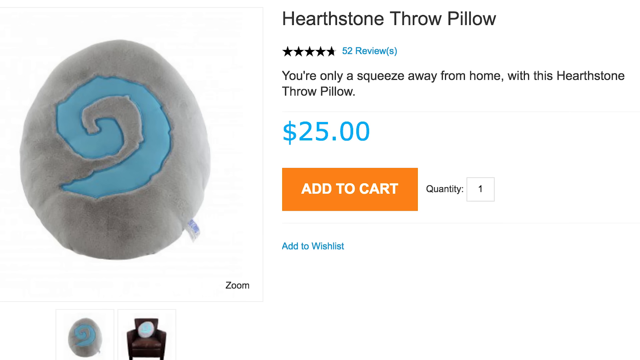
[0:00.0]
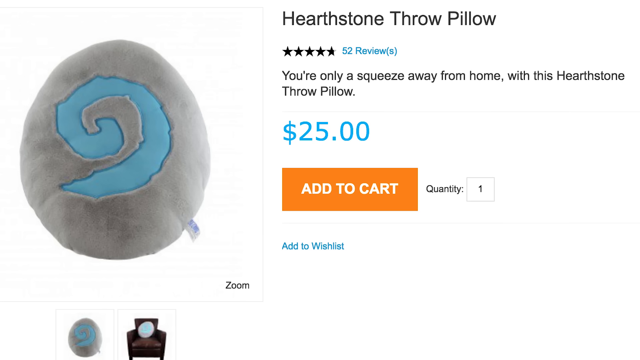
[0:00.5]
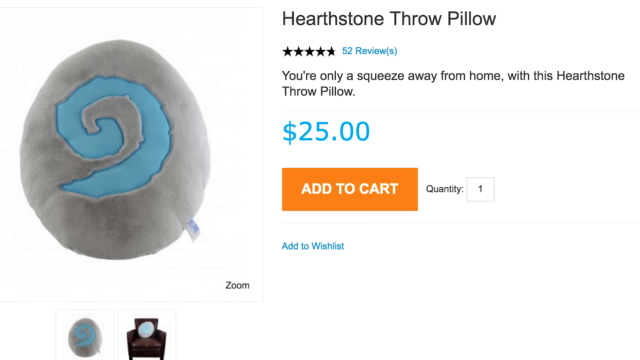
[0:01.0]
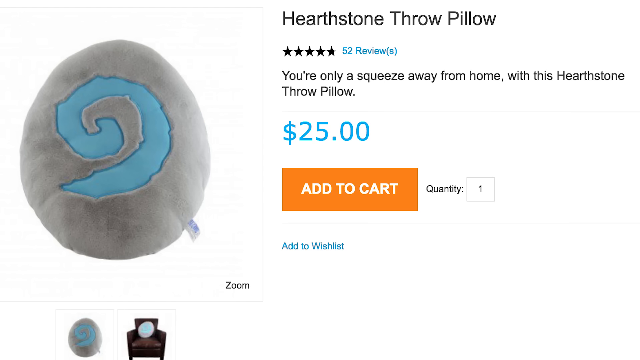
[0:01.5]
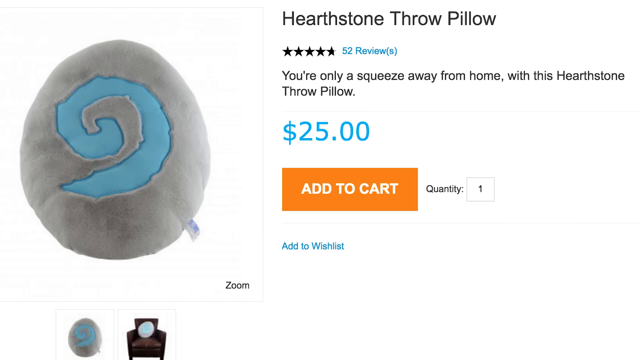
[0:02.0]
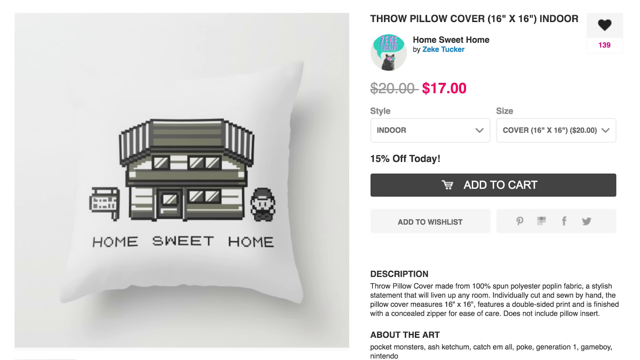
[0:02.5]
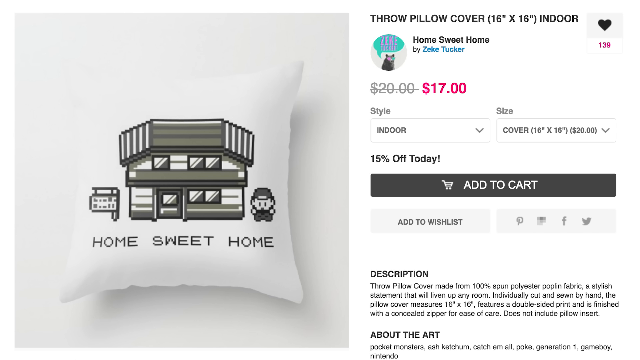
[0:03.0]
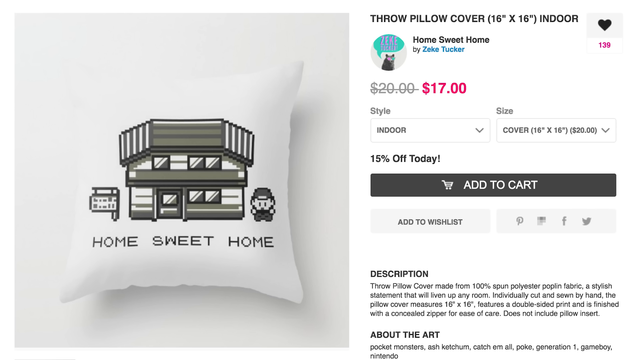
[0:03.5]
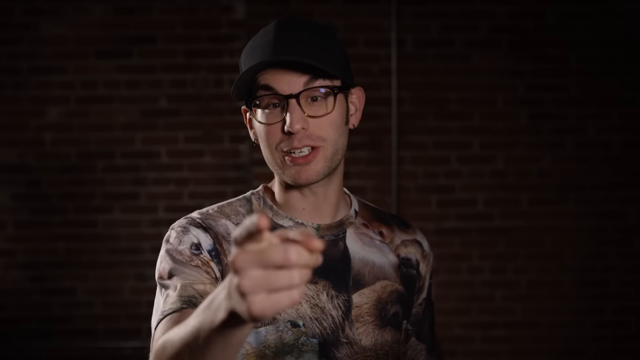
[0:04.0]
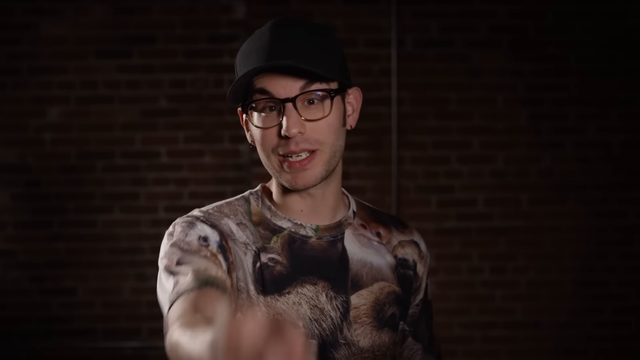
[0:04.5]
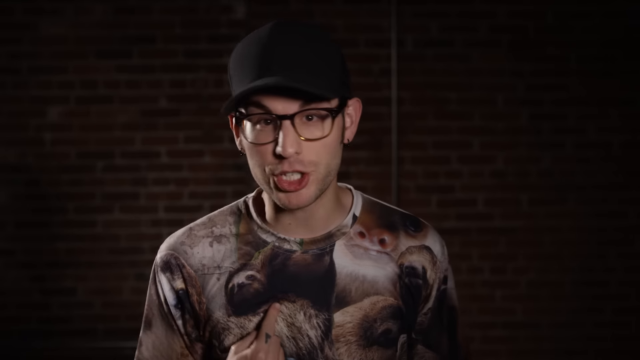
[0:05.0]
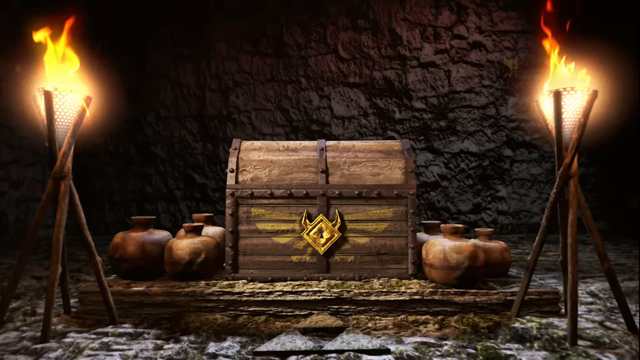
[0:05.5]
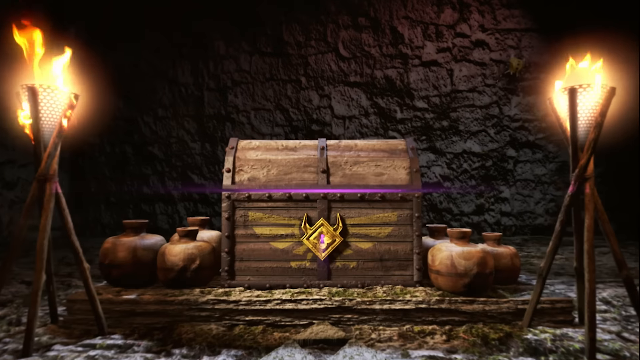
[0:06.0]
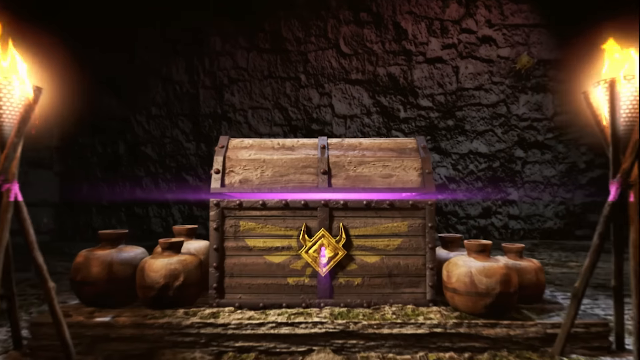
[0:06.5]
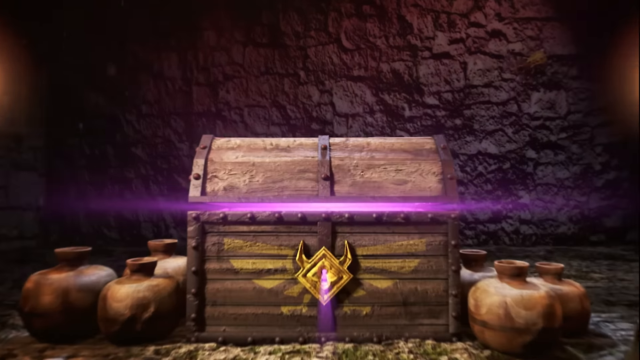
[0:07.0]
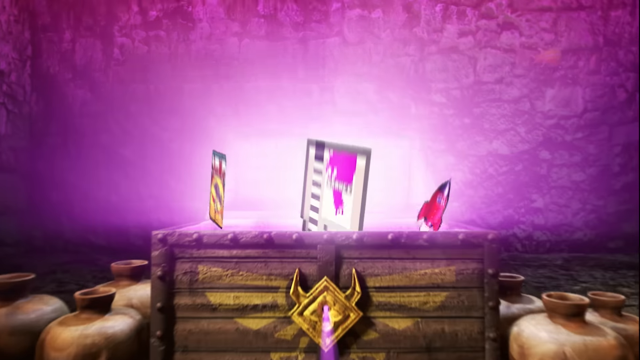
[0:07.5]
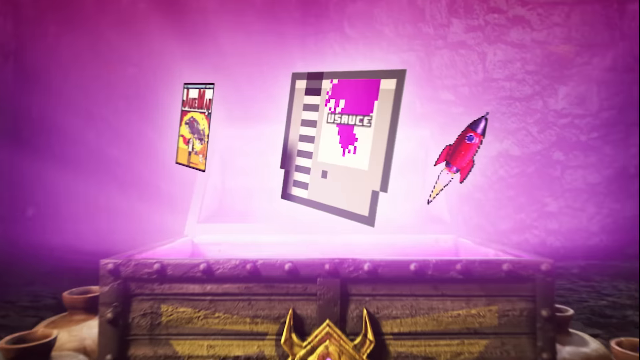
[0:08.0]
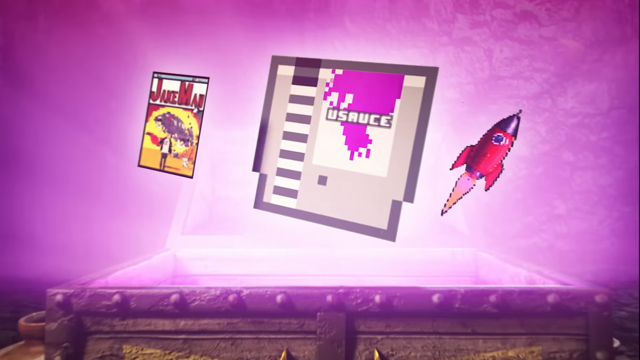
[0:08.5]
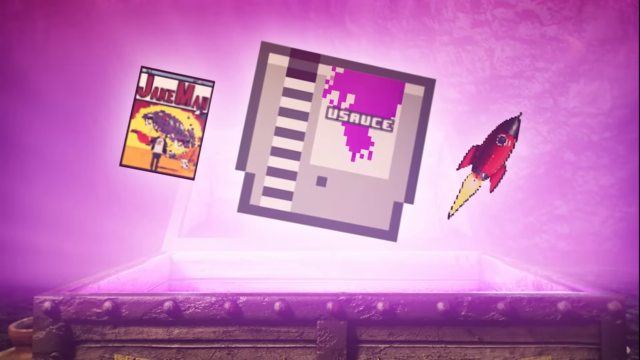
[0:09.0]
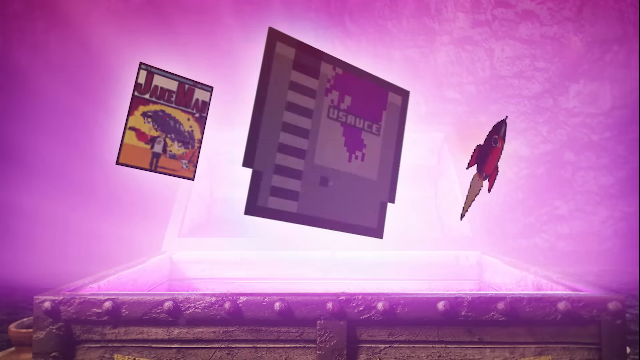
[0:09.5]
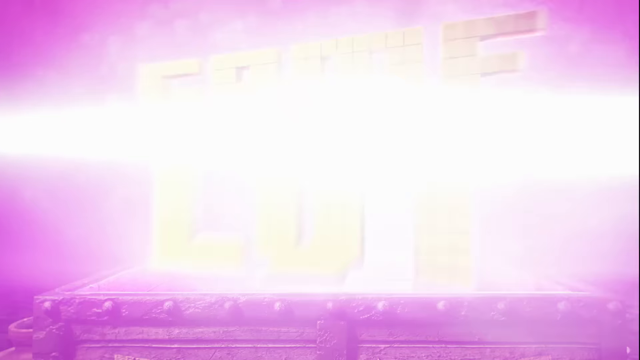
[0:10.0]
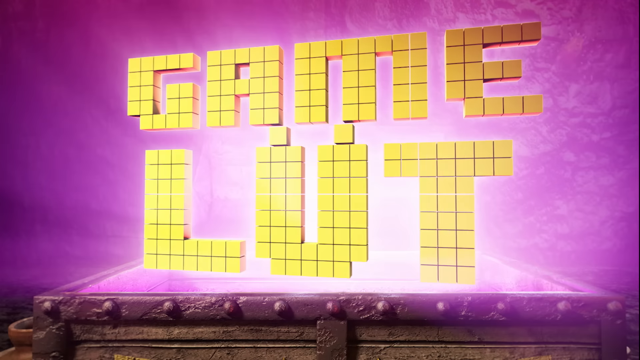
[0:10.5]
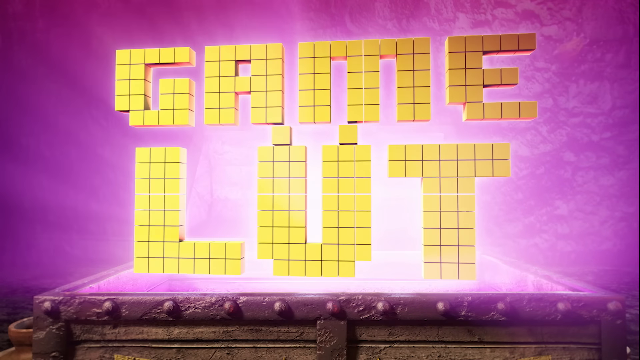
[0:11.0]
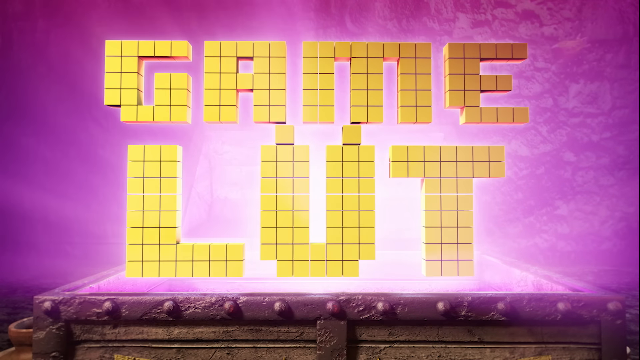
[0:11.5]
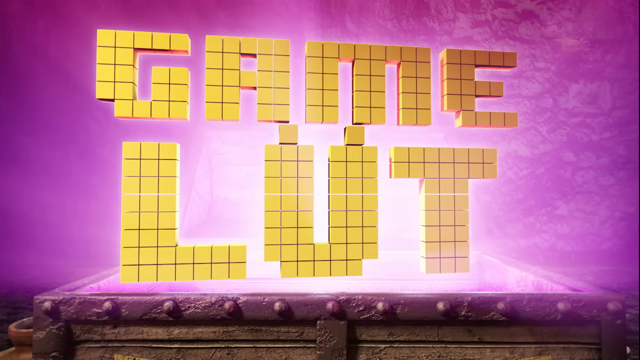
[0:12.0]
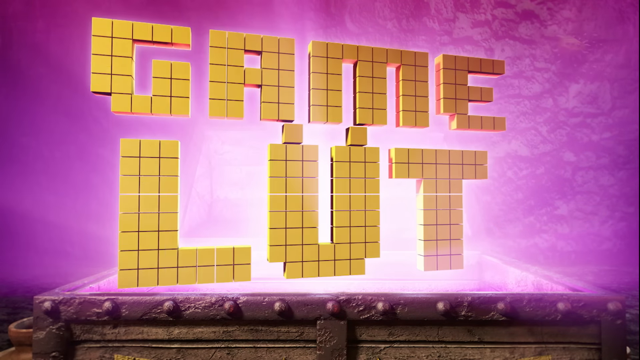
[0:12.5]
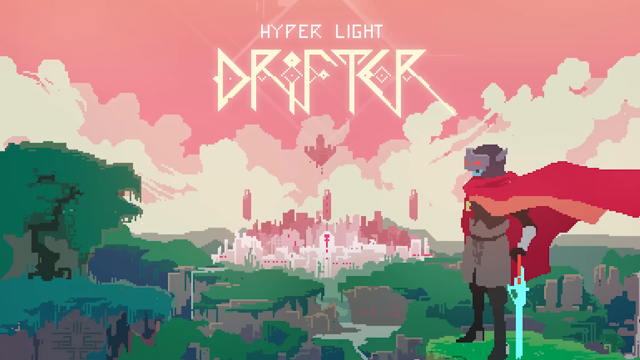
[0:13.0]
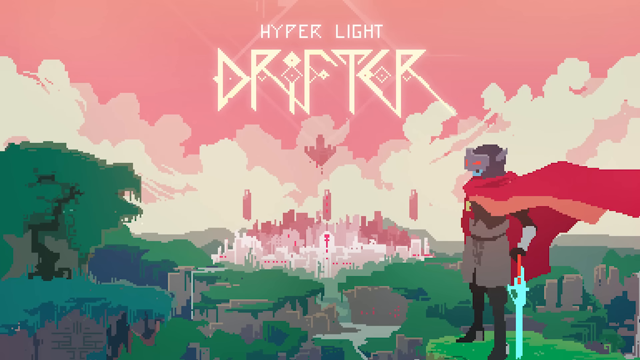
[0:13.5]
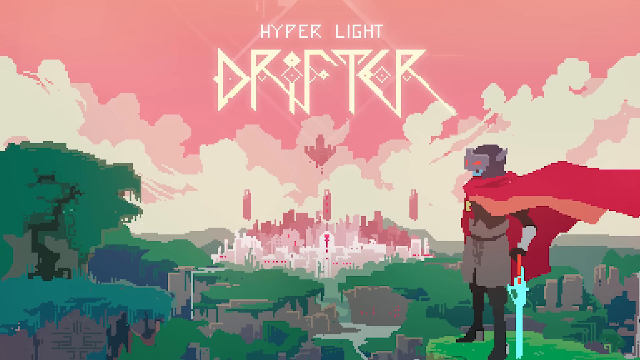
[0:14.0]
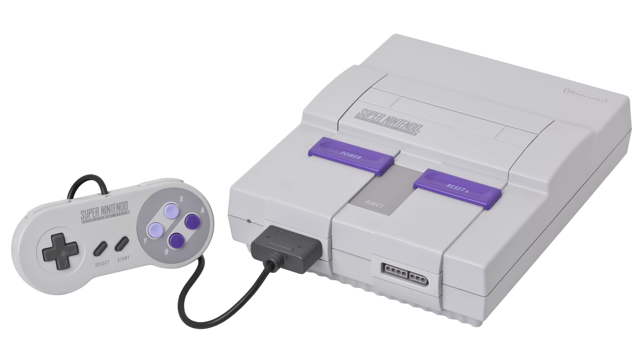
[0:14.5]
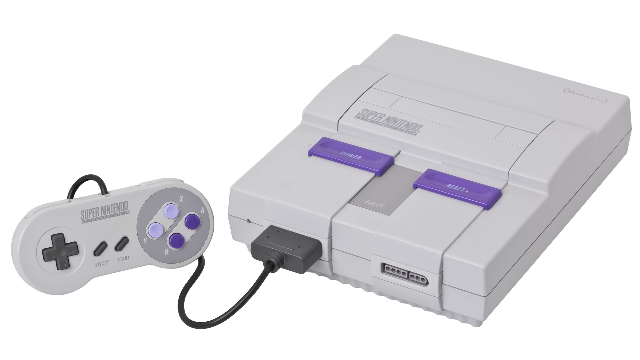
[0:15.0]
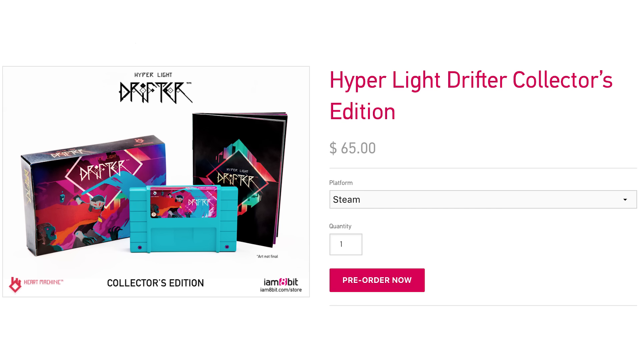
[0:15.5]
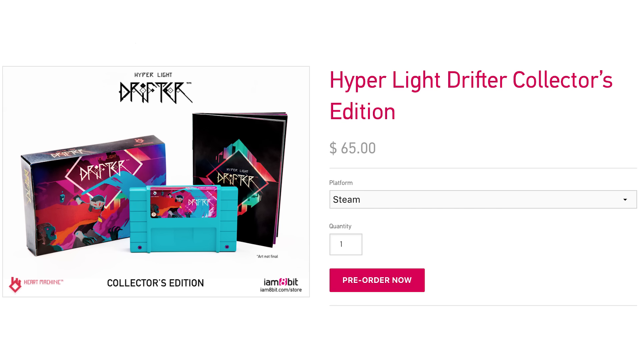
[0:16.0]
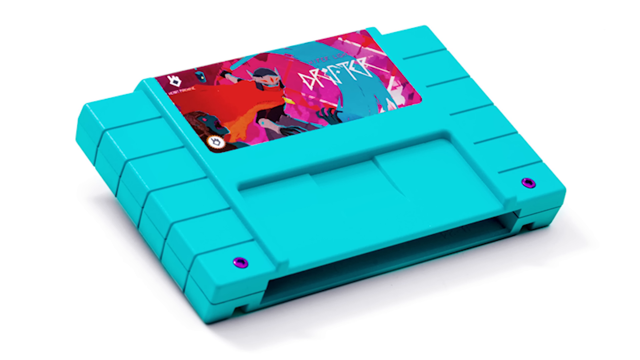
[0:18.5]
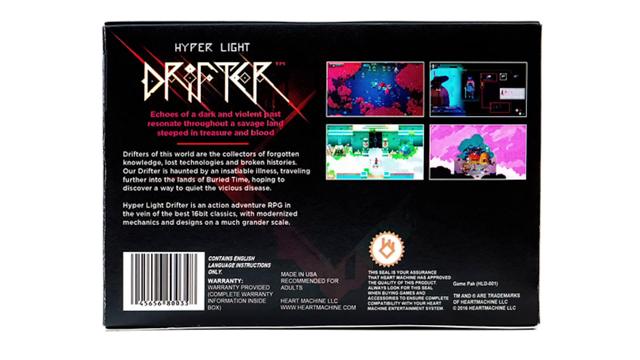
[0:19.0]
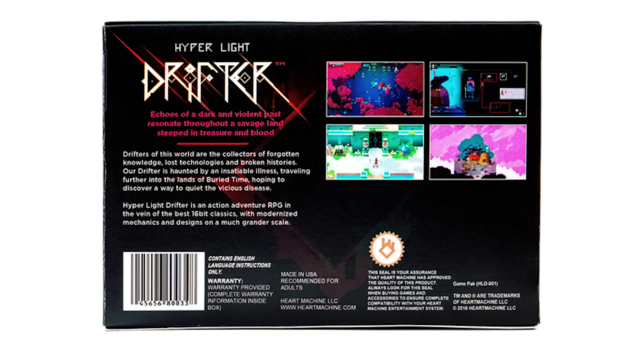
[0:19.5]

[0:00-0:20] A guy opens a chest, revealing a video game system; the edition is called Hyper Light Drifter. A Heartstone throw pillow appears with the text "you're only one squeeze away with this heartstone pillow". A guy in an interesting shirt points at the viewer. A chest opens showing Vsauce, and the name Game Loot appears. An old gaming system is shown, followed by an option to pre-order the game Hyper Light Drifter on Steam. The Heartstone throw pillow, which looks like a plushie pillow, is listed at $25 with an option to add it to the cart and a quantity of one. Another pillow follows, then a rocket ship and something called Jake Man.